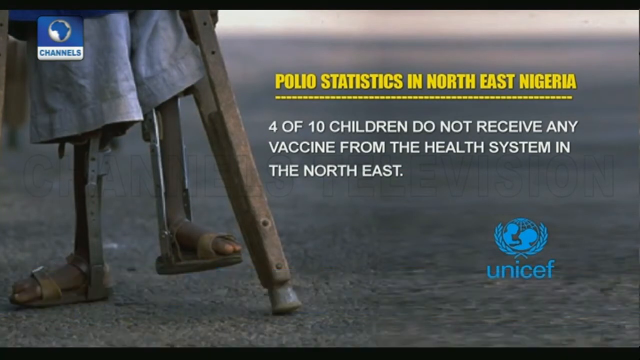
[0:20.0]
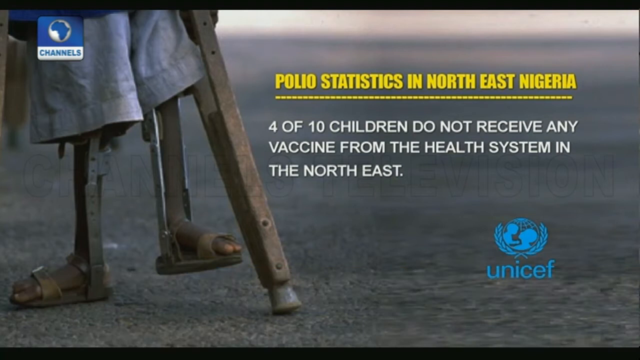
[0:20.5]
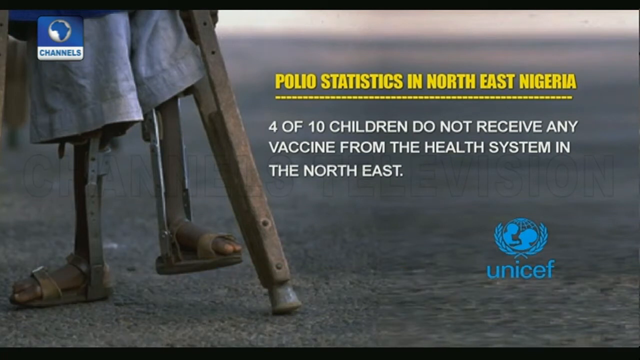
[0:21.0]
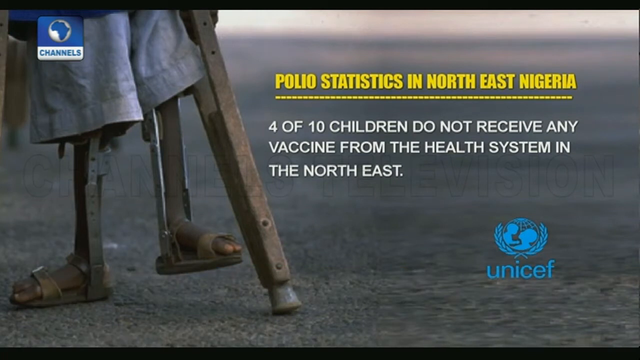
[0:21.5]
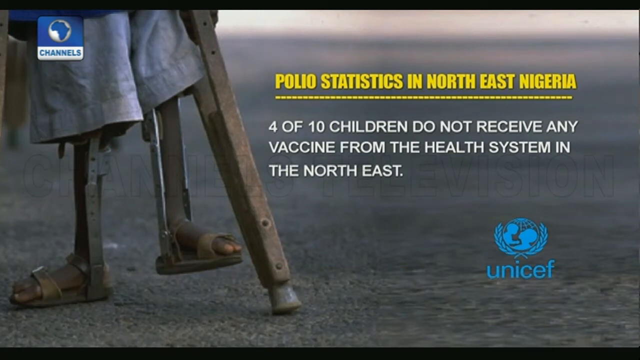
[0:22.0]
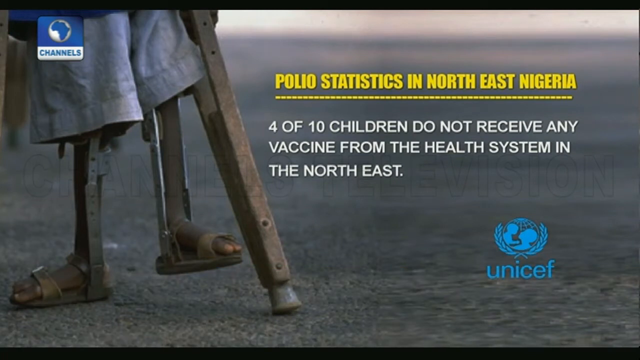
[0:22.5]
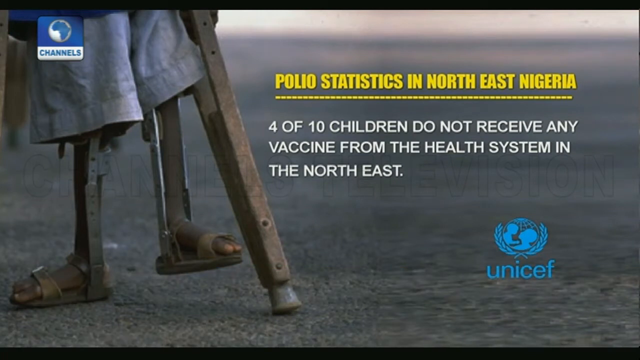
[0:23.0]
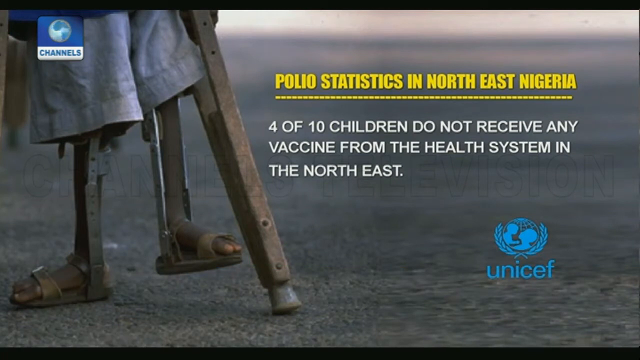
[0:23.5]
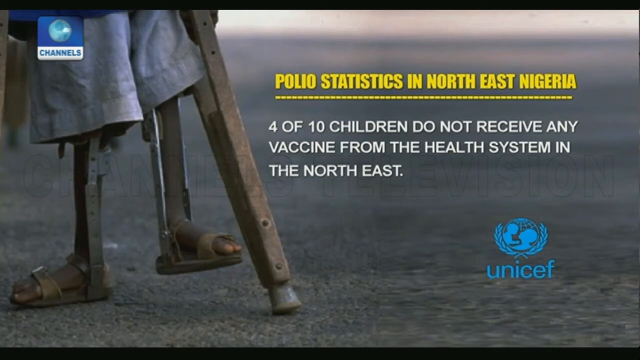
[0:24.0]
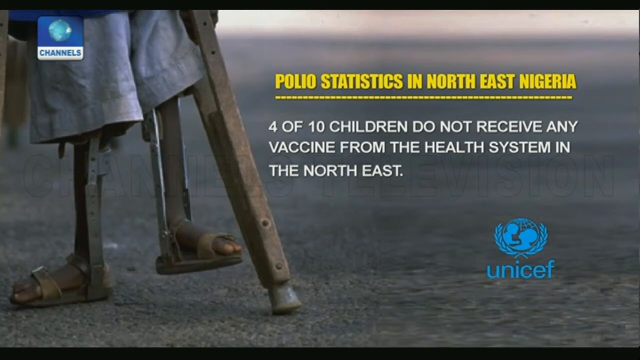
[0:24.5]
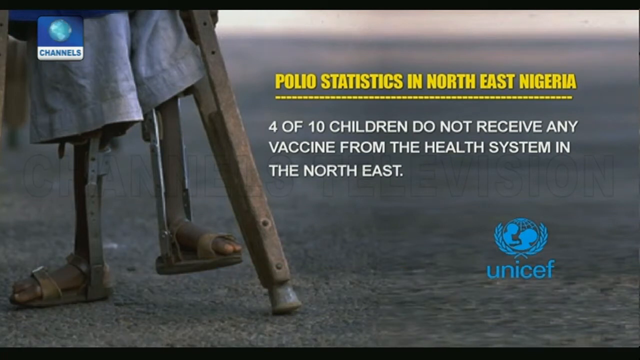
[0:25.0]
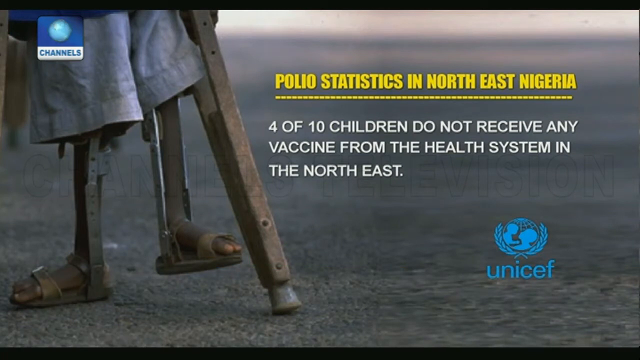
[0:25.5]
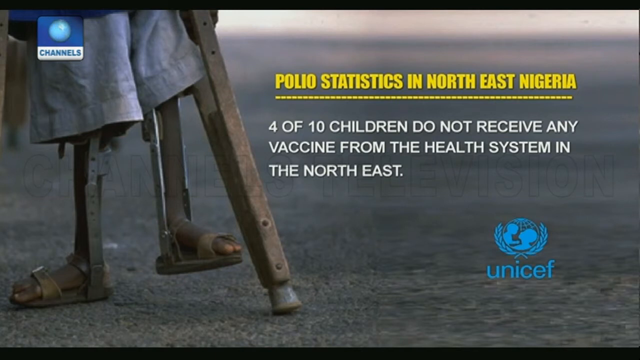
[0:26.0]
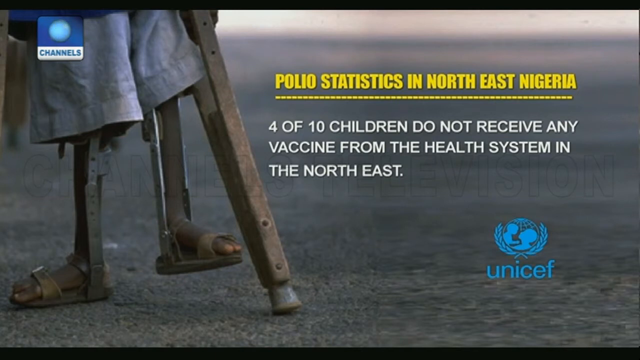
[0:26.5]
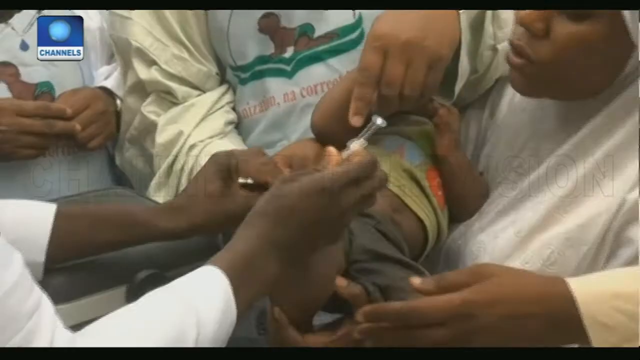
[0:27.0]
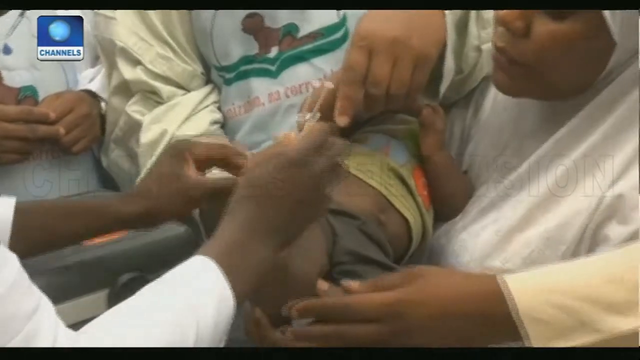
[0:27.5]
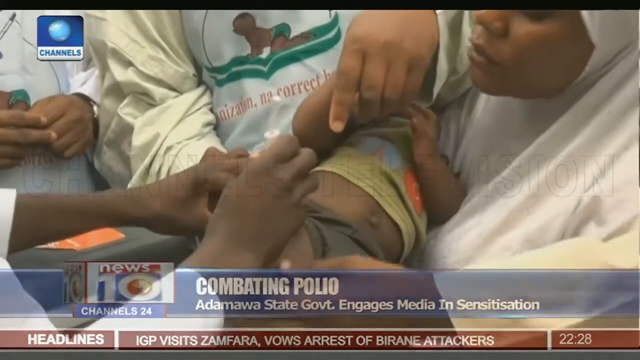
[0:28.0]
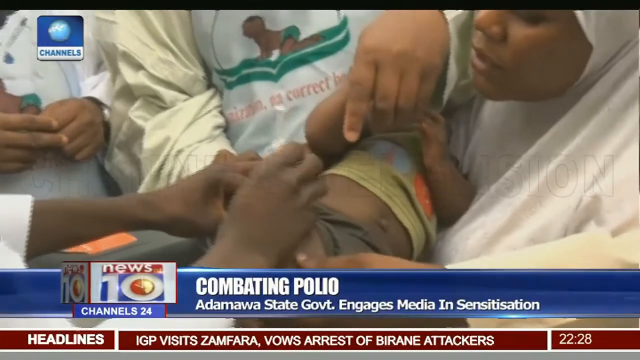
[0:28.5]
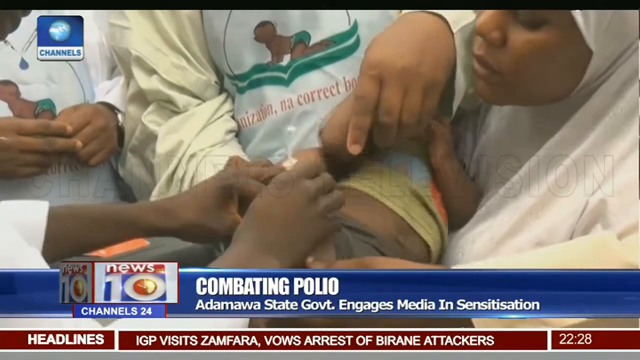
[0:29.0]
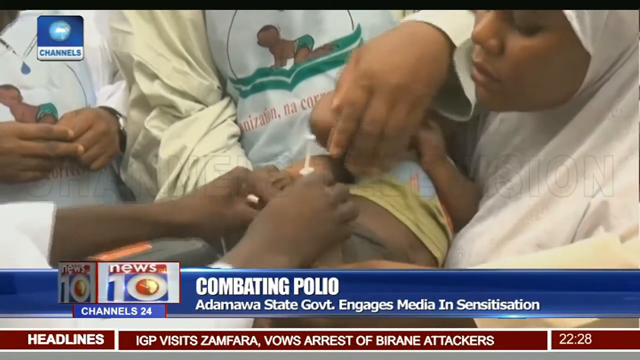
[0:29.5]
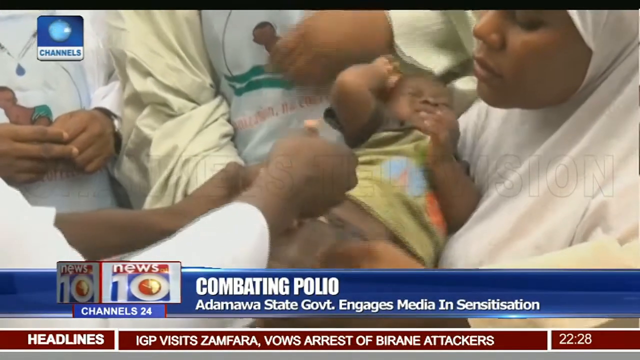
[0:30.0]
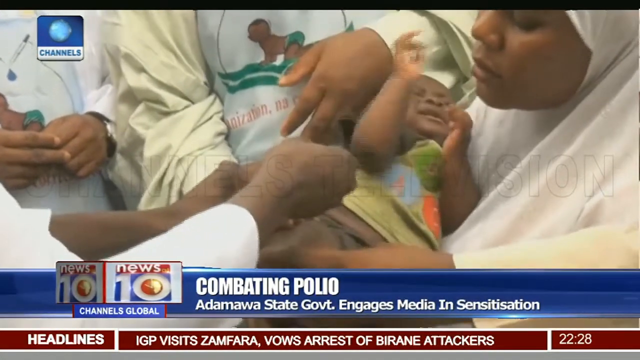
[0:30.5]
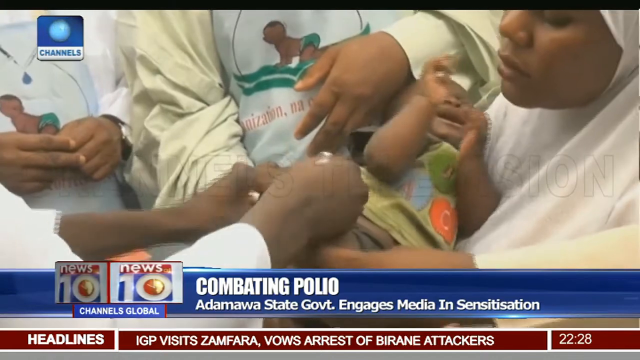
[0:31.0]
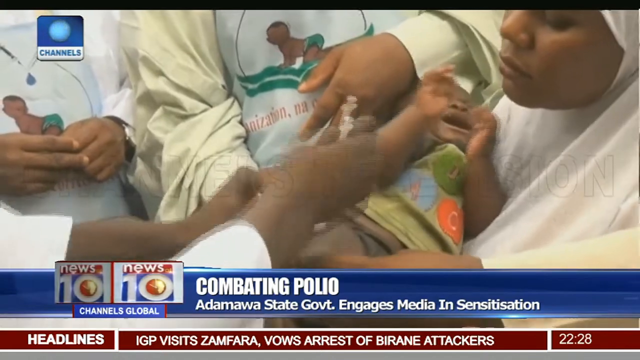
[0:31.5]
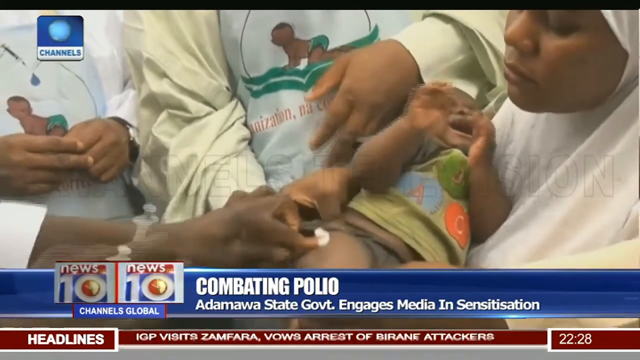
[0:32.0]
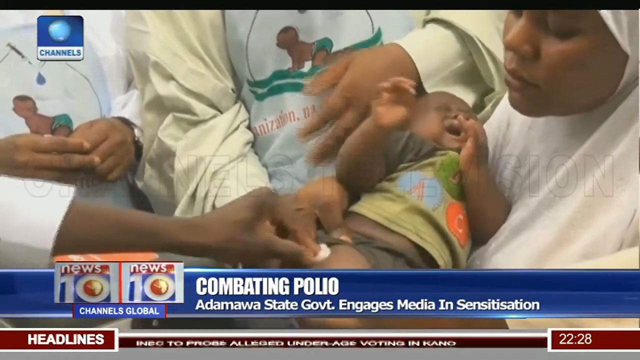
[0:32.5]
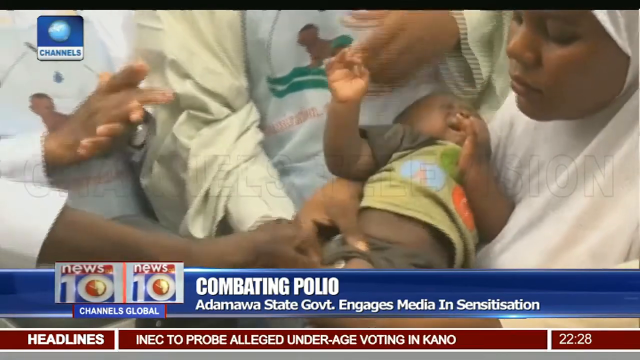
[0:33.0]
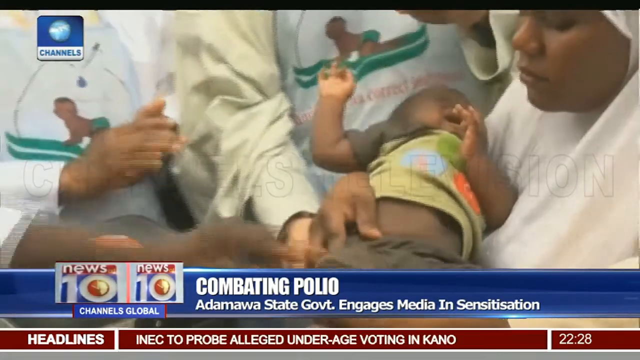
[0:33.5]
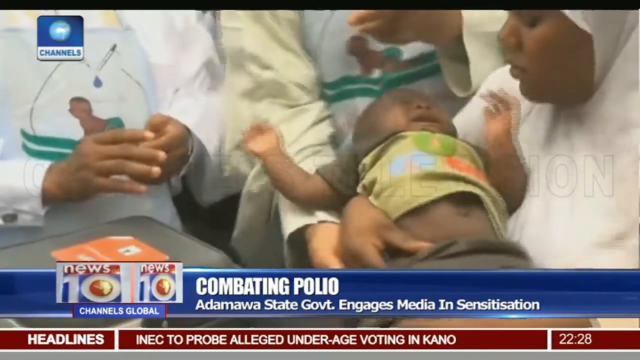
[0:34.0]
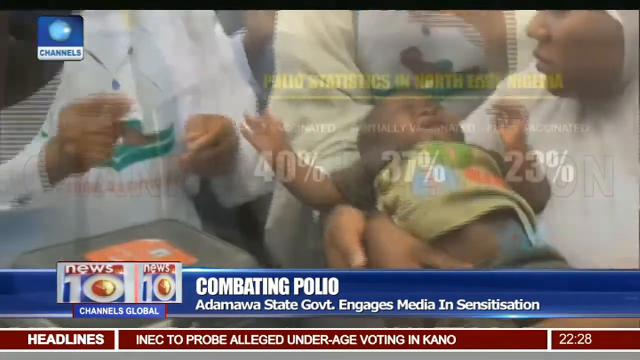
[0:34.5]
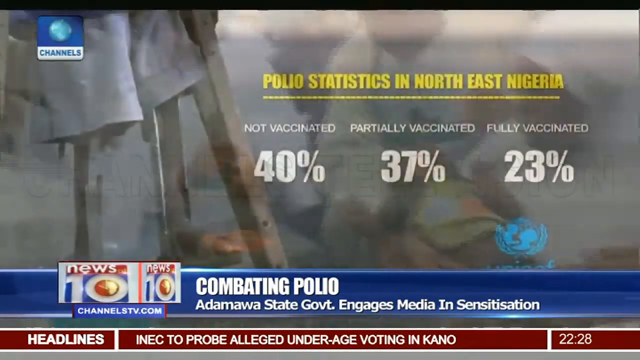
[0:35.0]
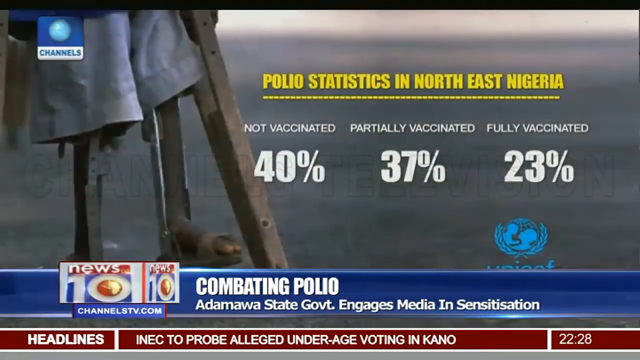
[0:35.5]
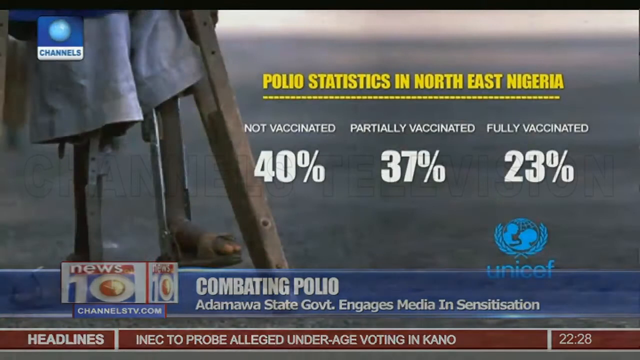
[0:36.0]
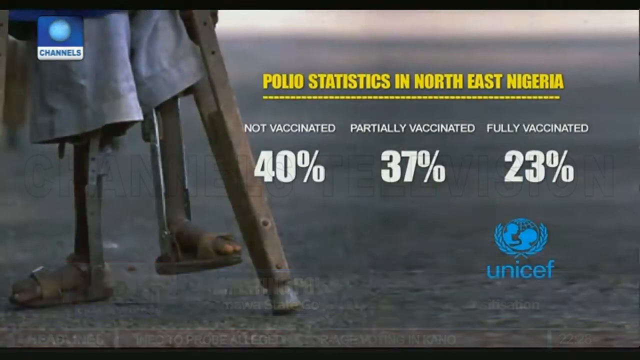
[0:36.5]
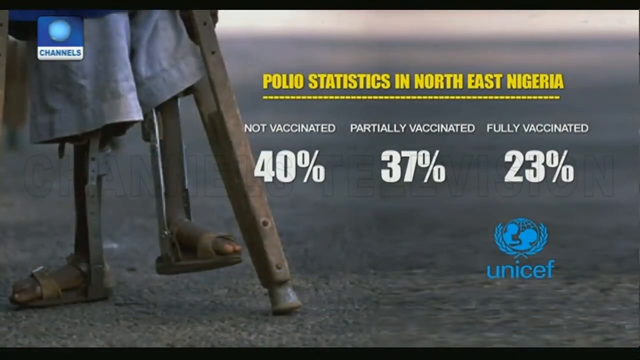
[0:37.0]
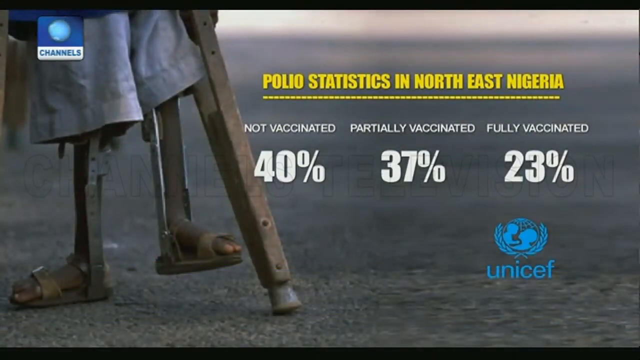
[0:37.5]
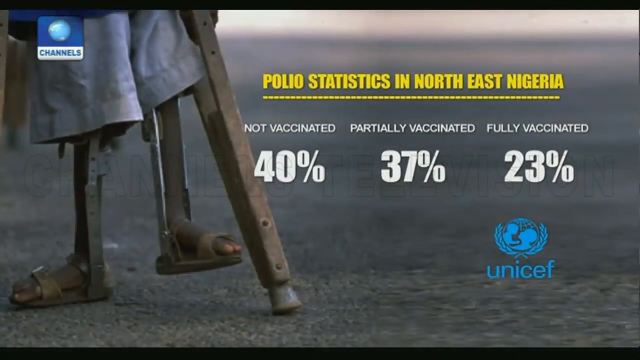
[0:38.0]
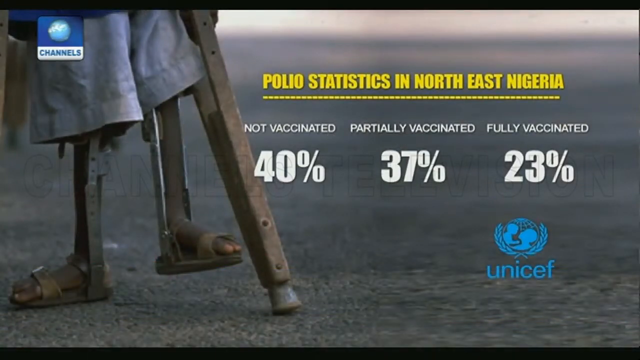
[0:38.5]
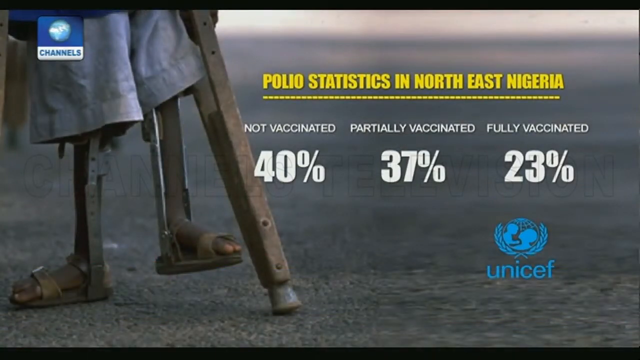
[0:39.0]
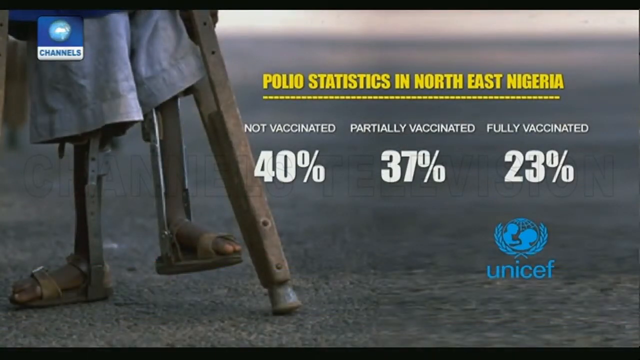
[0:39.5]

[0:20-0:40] Text reads "4 out of 10 children do not receive any vaccine from the health system in the North-East." Children are vaccinated while parents help the nurses with the children. A graphic of polio statistics in North-East Nigeria shows 40% not vaccinated, 30% partially vaccinated and 23% fully vaccinated, the lowest figure. The message is attributed to UNICEF and the report comes from the channels. Footage shows children who end up unable to walk, followed by more footage of kids being vaccinated.